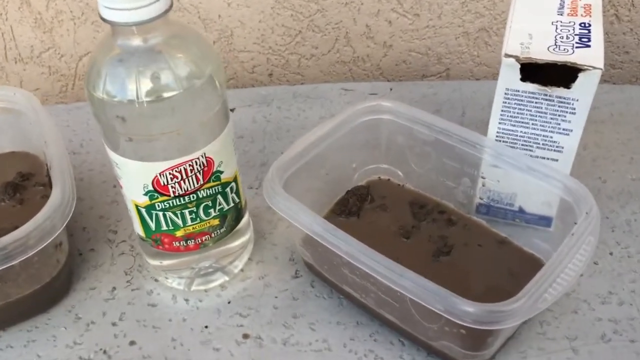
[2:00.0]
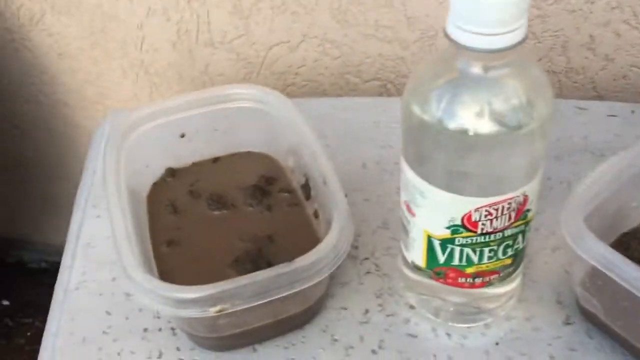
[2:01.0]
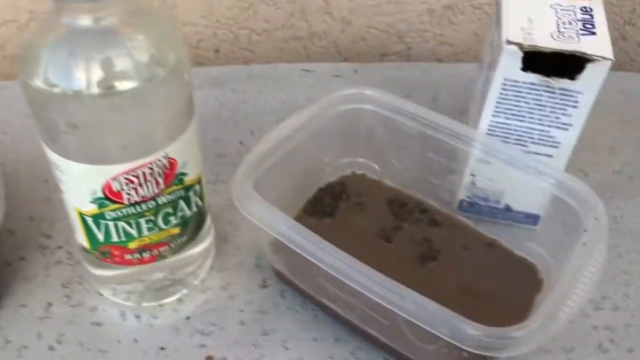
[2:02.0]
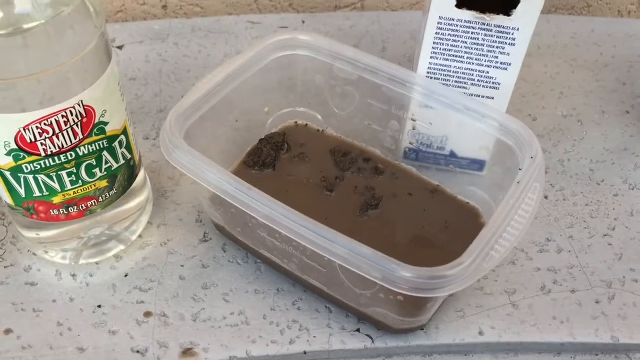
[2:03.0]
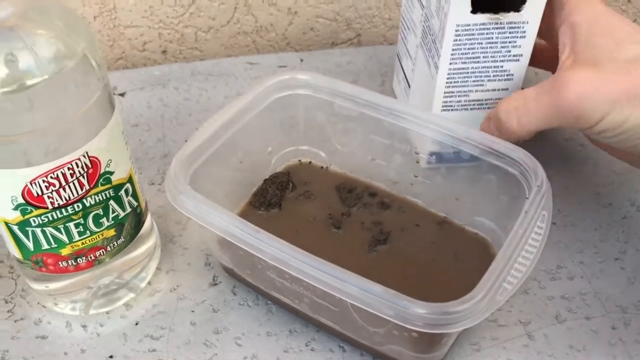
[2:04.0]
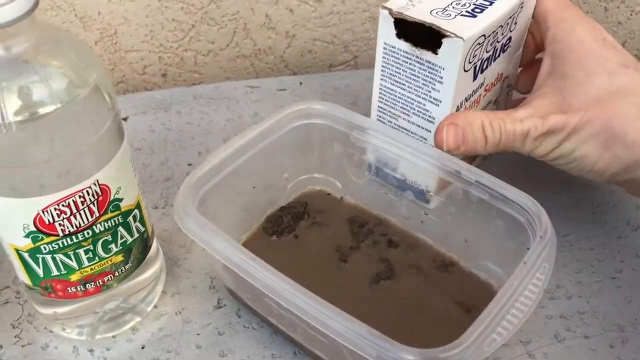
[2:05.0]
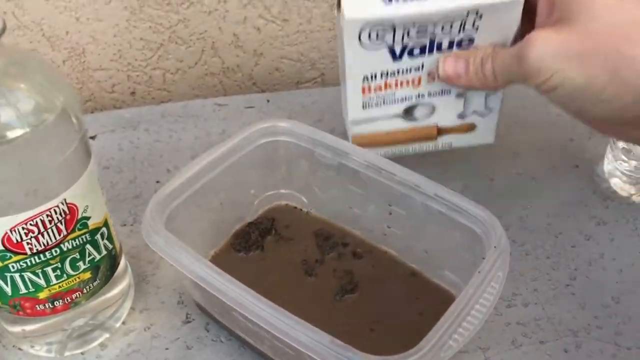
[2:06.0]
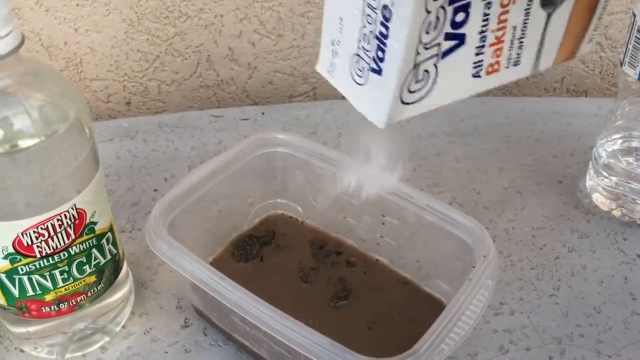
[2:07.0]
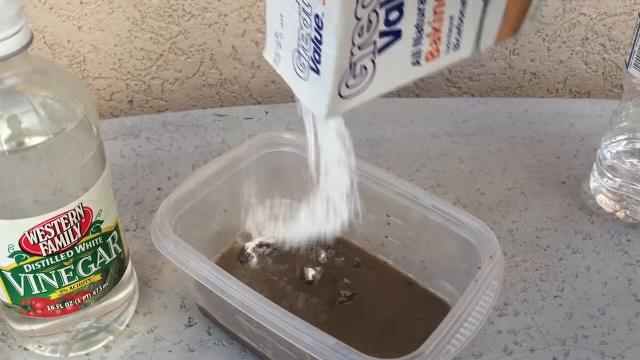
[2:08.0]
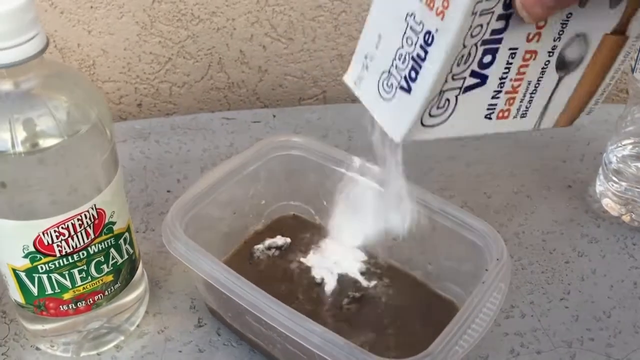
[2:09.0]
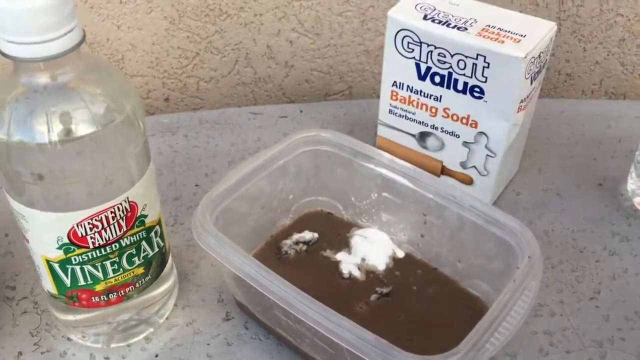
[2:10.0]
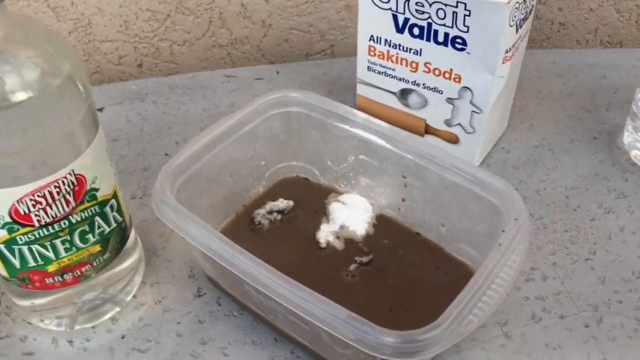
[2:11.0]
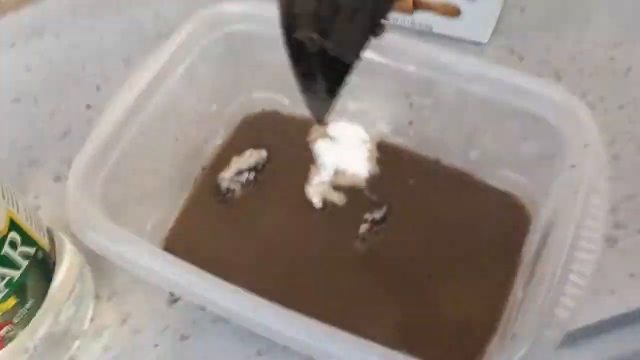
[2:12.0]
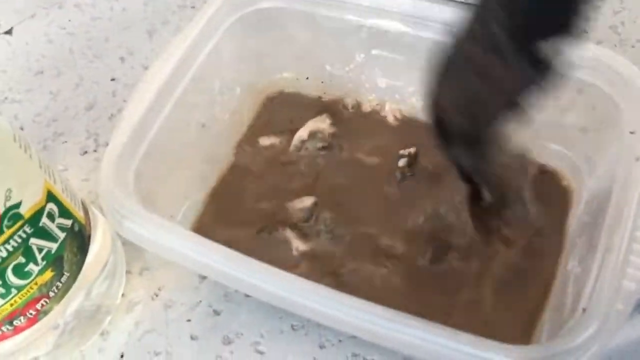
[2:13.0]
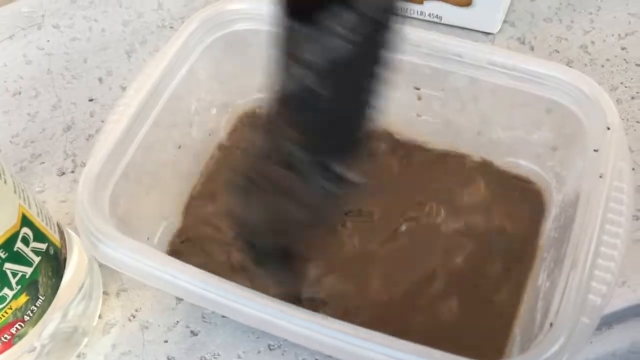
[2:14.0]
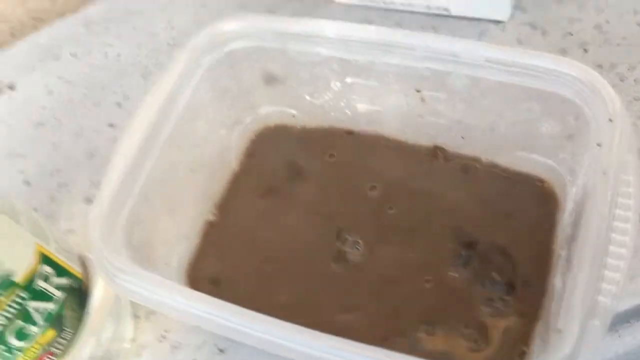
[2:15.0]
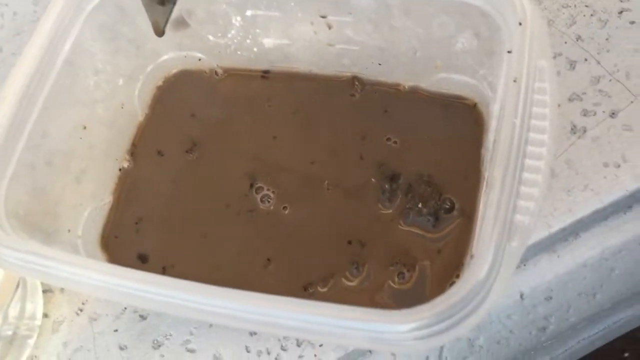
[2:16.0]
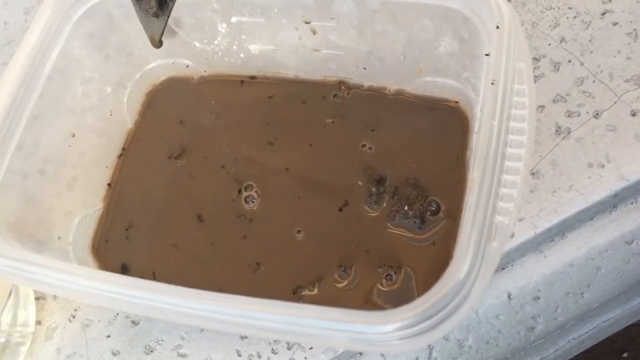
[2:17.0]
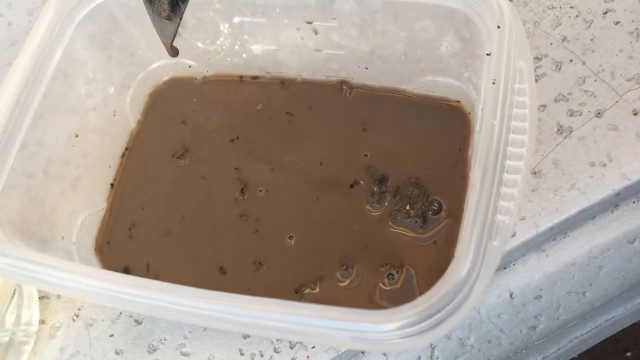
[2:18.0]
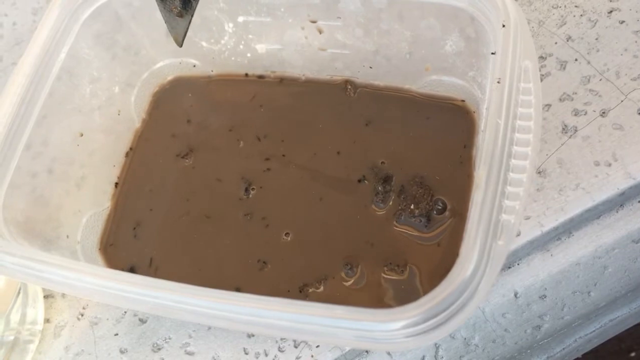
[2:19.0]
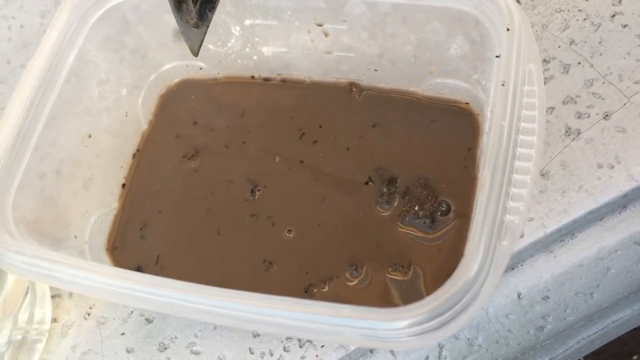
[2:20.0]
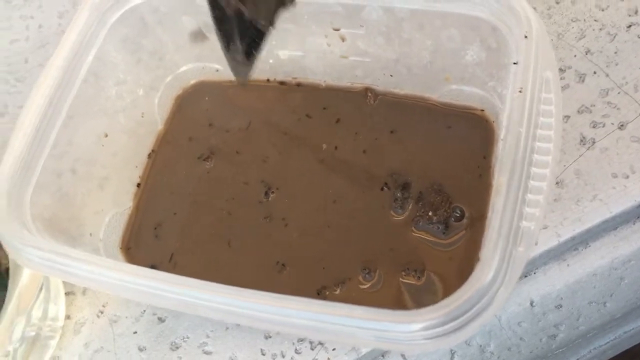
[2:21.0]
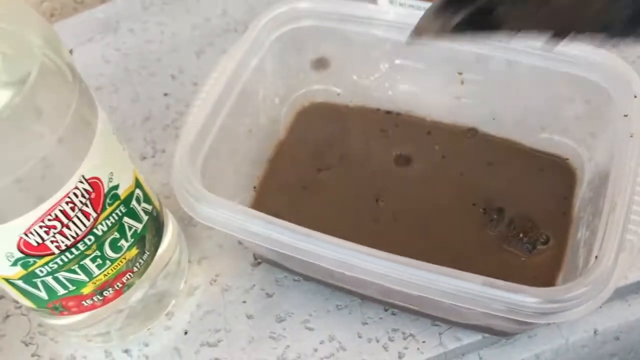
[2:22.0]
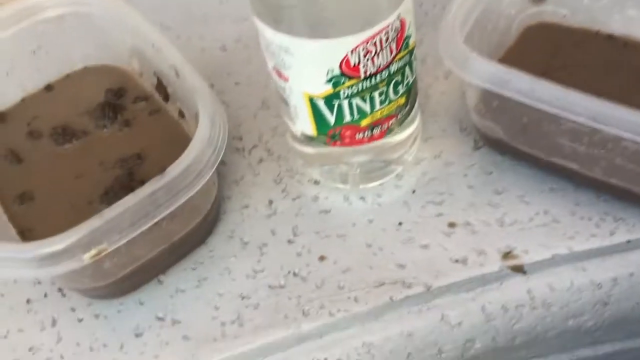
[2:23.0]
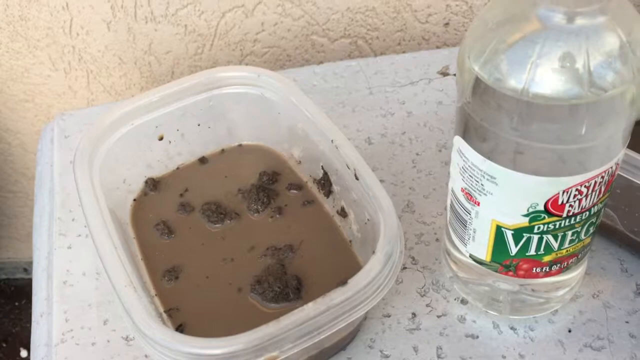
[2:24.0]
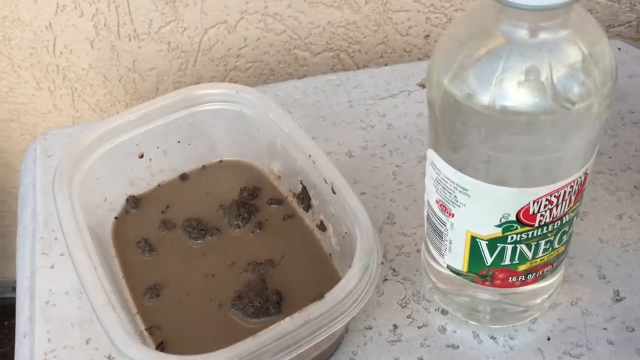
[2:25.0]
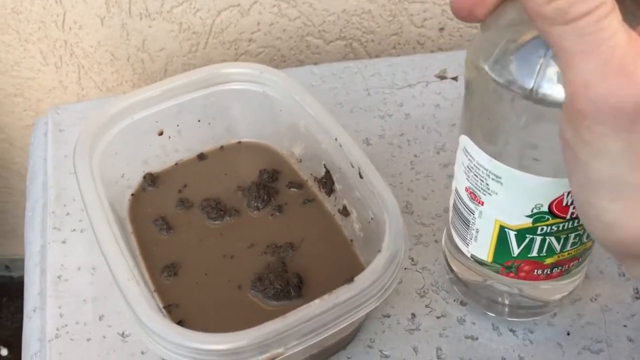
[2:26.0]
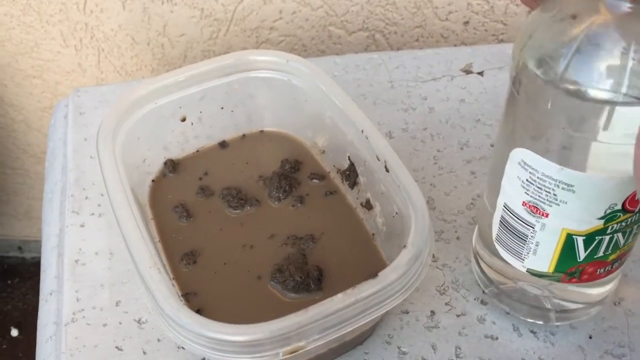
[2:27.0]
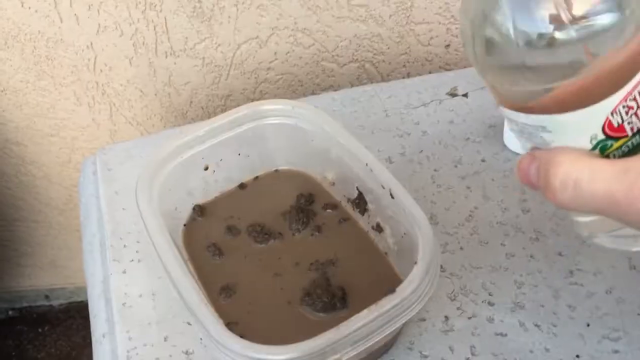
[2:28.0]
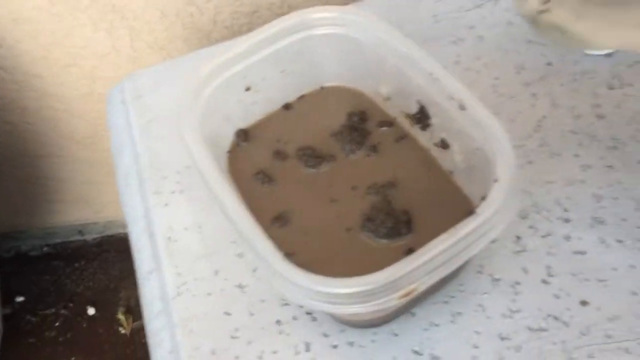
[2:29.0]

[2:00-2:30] On the top of a table are a Tupperware on the left, vinegar in the middle, and another Tupperware on the right, with the box of baking soda behind that one. The Tupperware containers are full of muddy water. The man reaches out with his right hand and grabs the box of Great Value baking soda, then empties it into one of the Tupperware containers, shaking it back and forth. A knife blade comes in from the top of the screen into the Tupperware and he begins to stir the water. Small bubbles form and little pieces of mud and dirt float on the top. The view then shows the other Tupperware, full of mud; the man reaches down with his right hand, grabs the vinegar, opens the top and begins to pour it into that Tupperware.